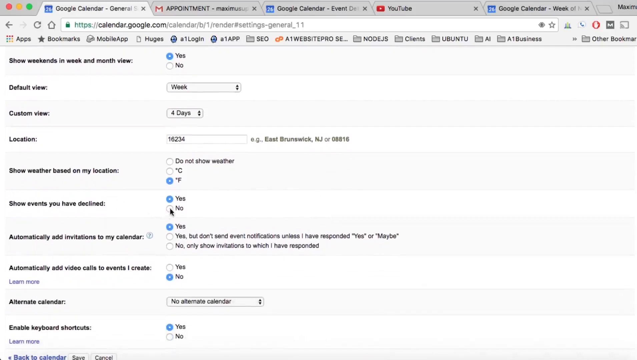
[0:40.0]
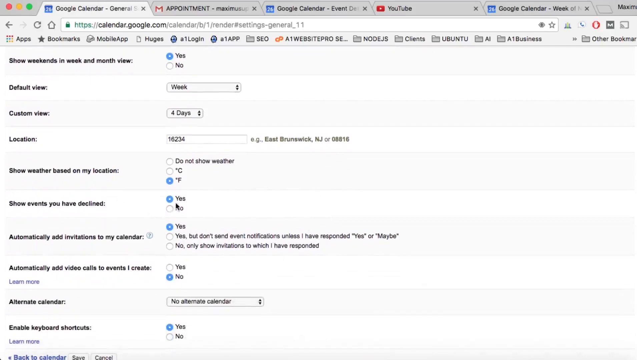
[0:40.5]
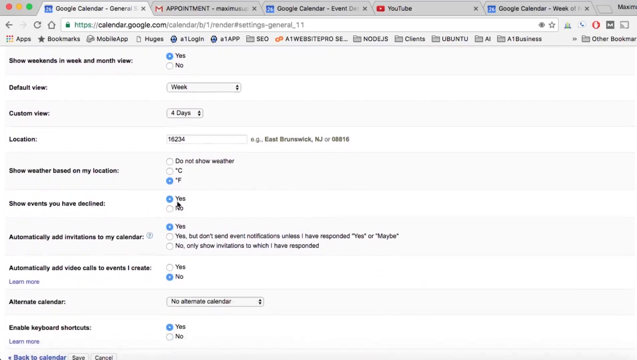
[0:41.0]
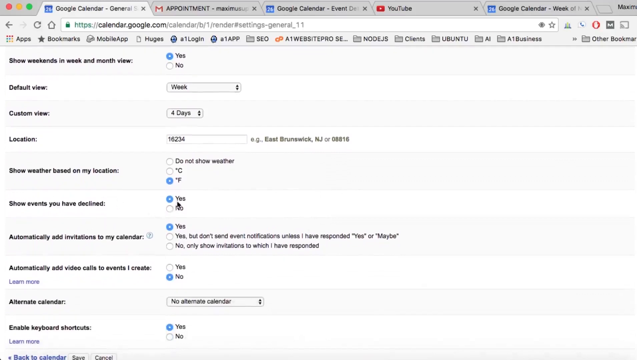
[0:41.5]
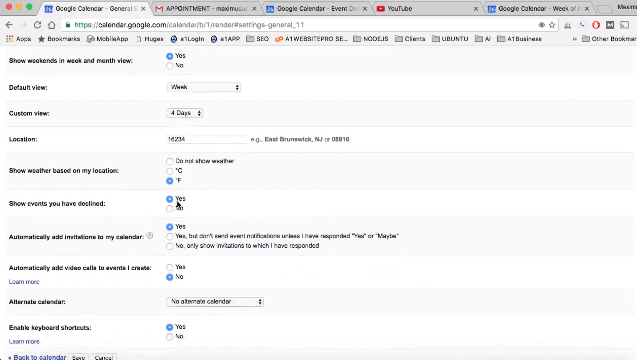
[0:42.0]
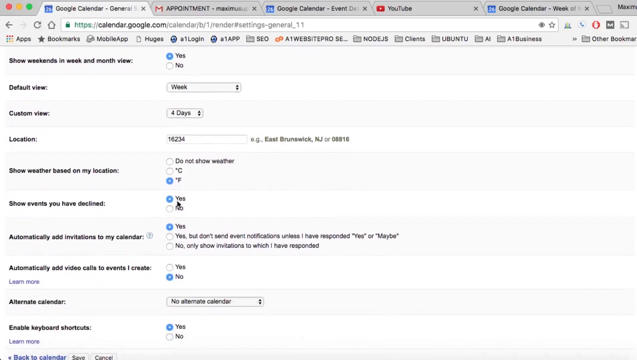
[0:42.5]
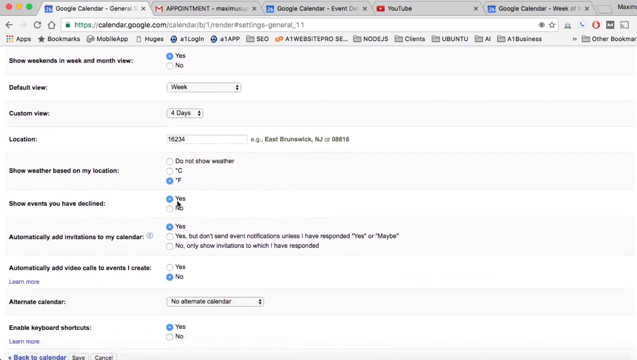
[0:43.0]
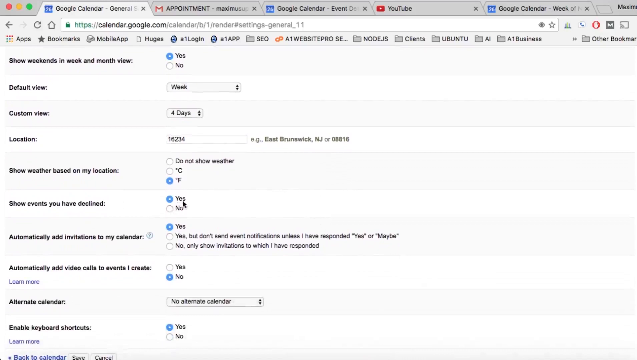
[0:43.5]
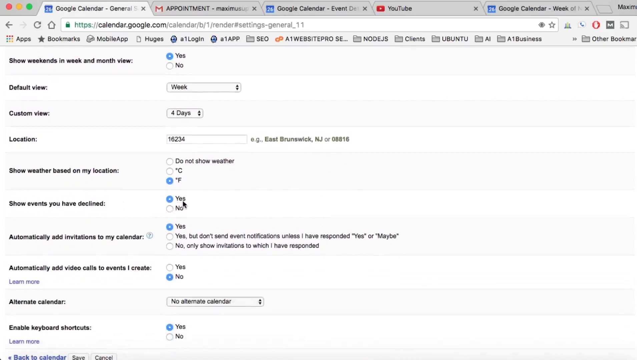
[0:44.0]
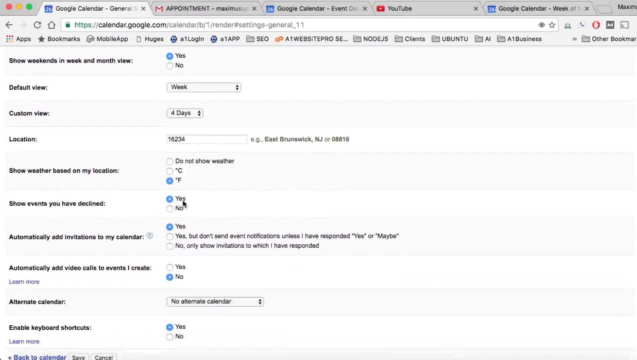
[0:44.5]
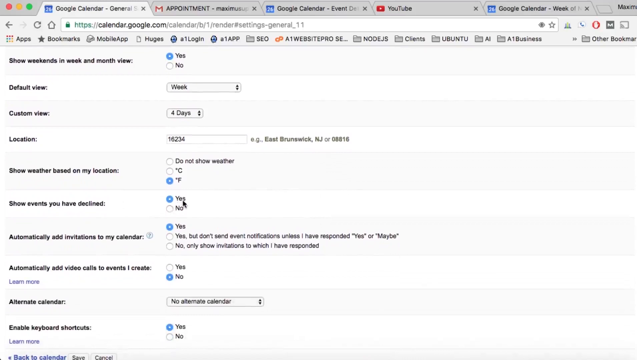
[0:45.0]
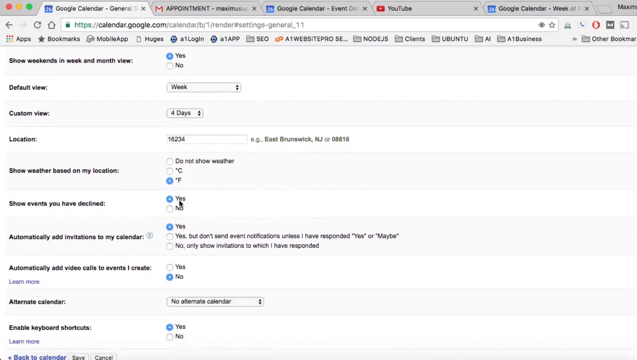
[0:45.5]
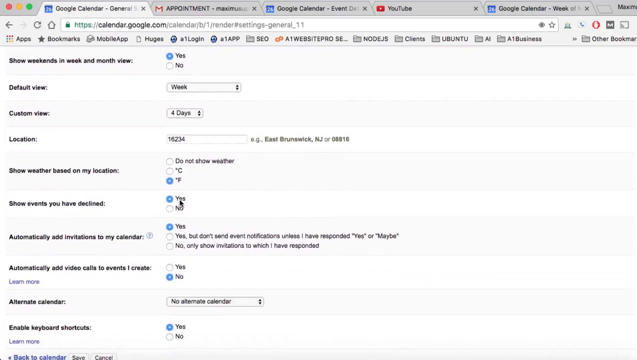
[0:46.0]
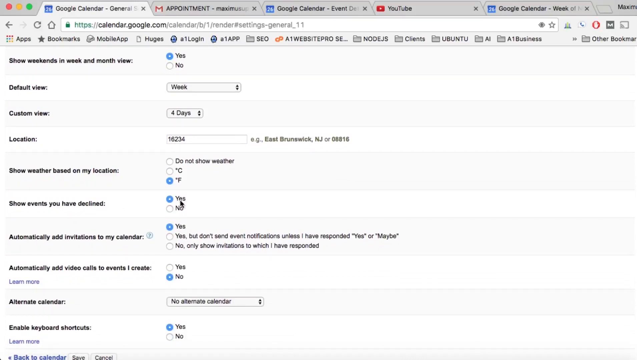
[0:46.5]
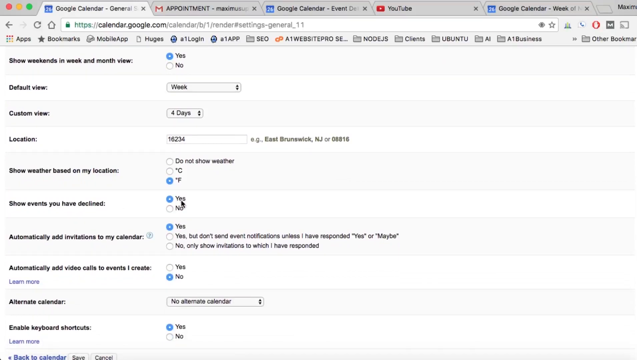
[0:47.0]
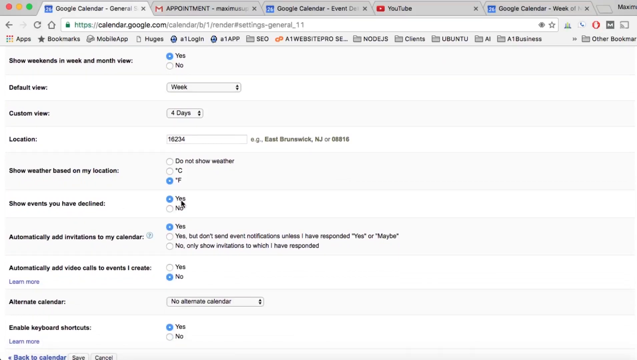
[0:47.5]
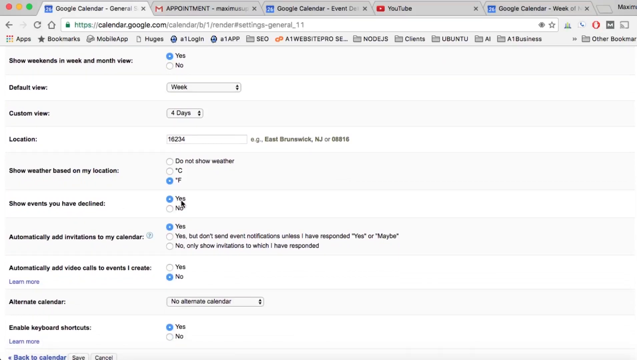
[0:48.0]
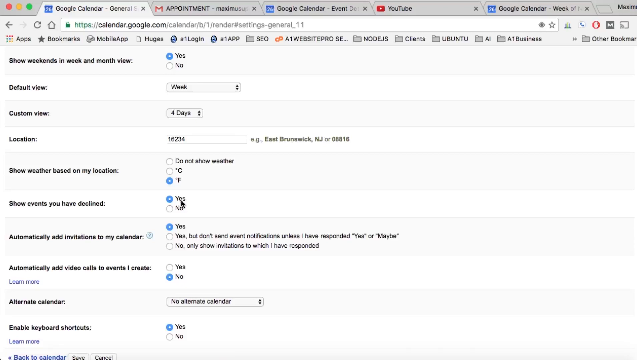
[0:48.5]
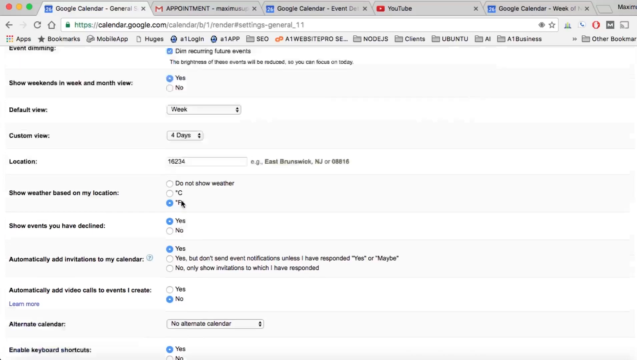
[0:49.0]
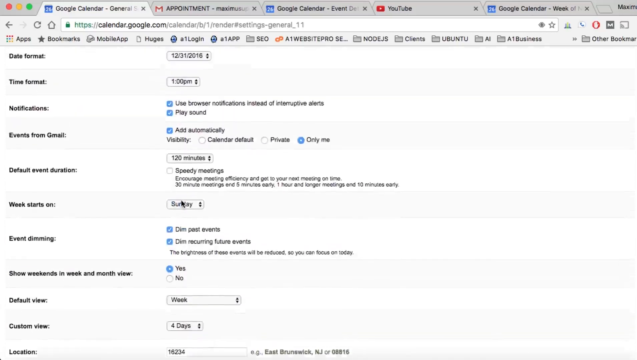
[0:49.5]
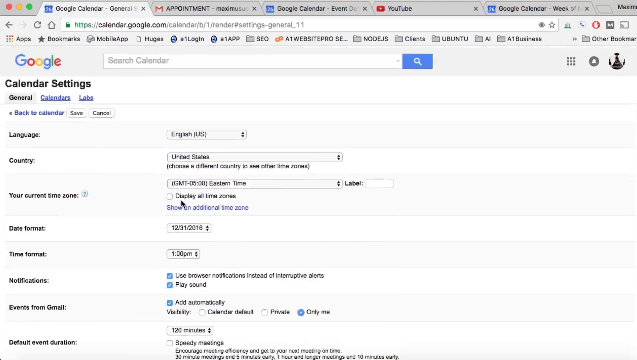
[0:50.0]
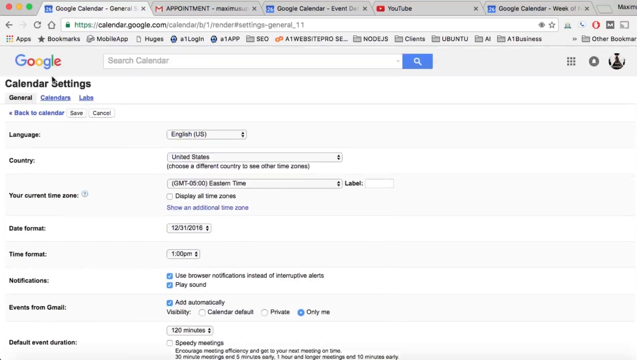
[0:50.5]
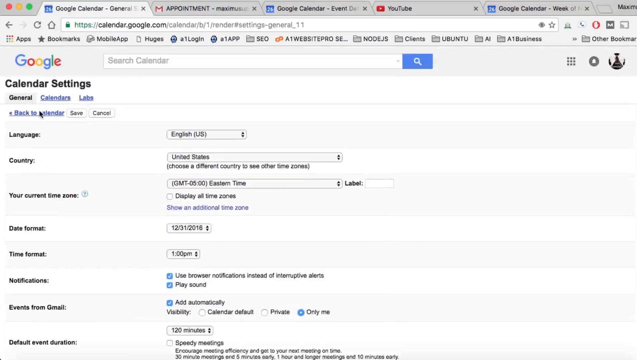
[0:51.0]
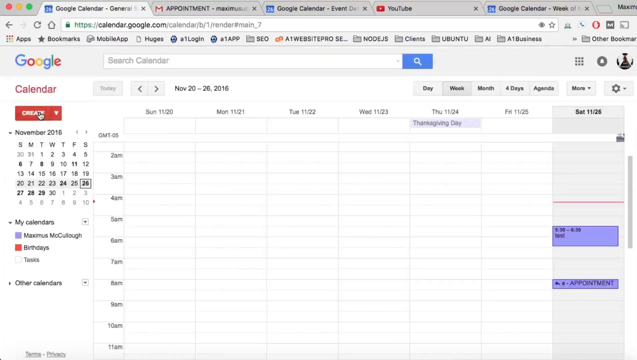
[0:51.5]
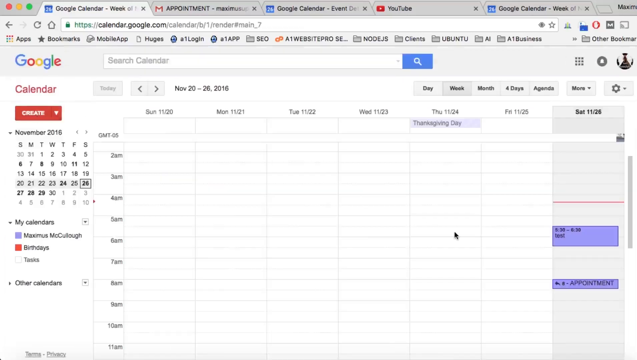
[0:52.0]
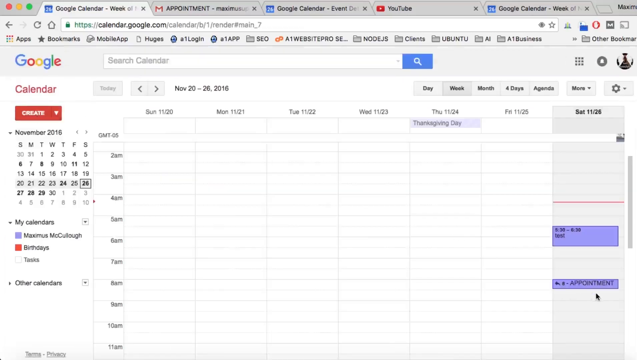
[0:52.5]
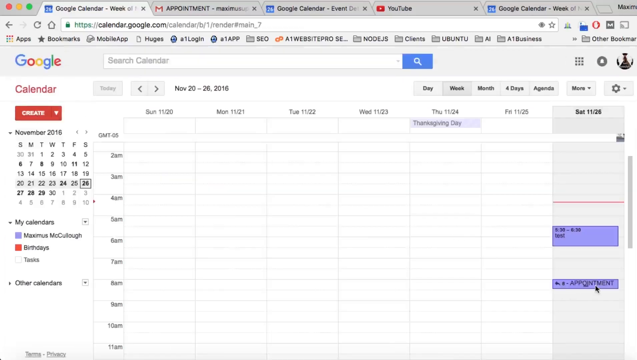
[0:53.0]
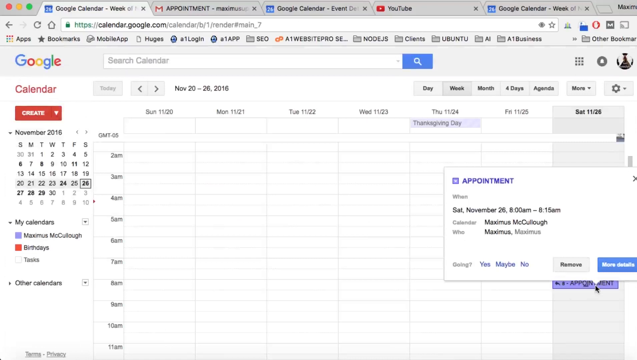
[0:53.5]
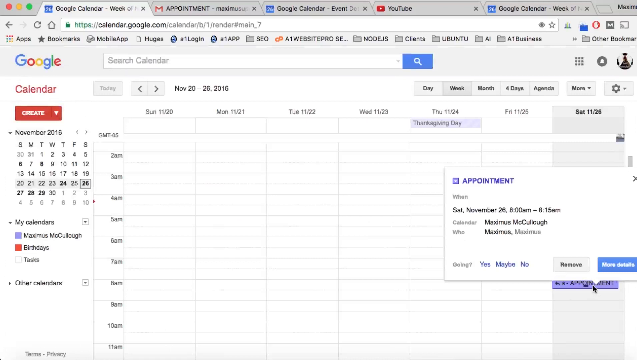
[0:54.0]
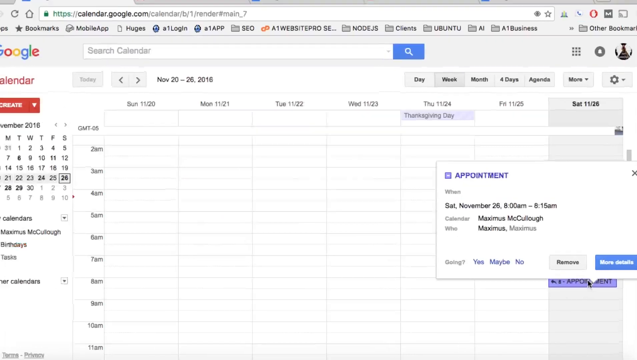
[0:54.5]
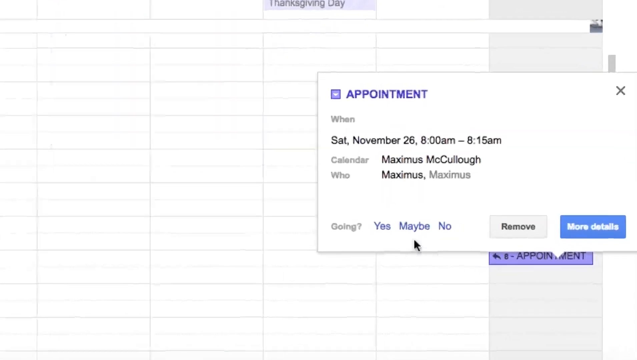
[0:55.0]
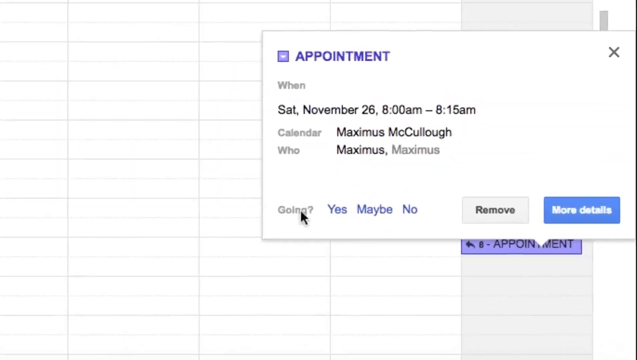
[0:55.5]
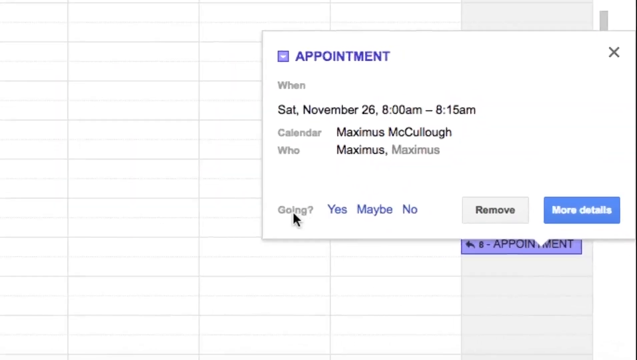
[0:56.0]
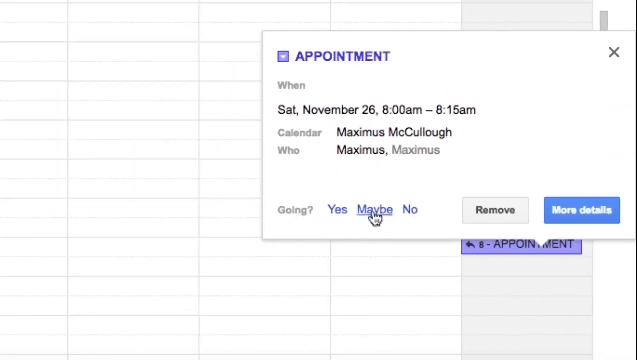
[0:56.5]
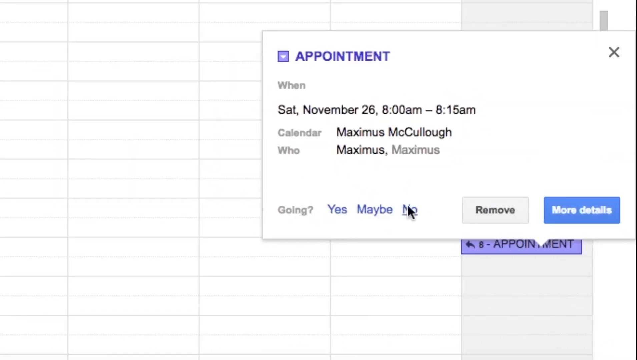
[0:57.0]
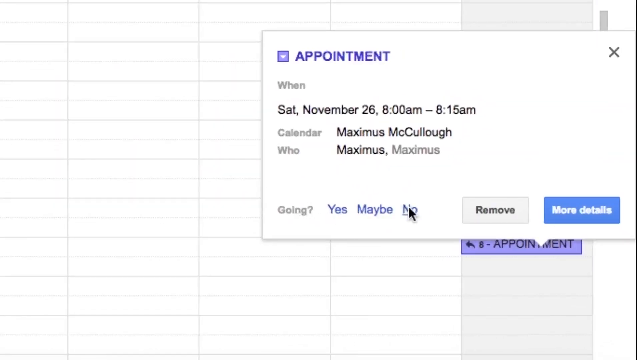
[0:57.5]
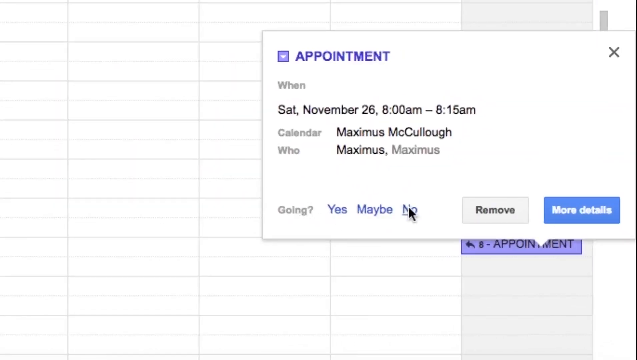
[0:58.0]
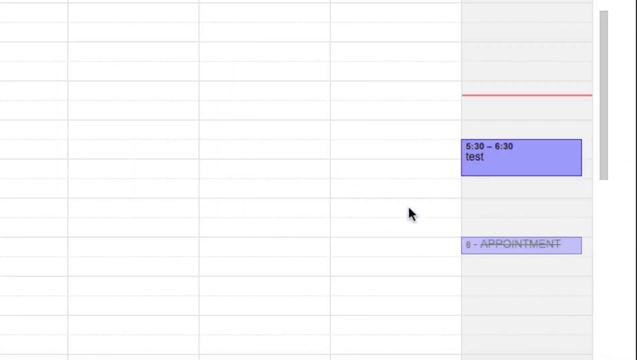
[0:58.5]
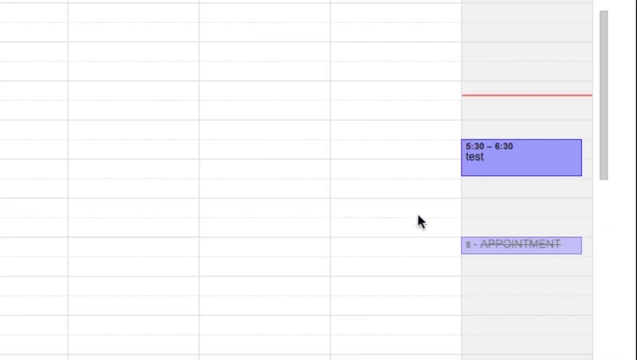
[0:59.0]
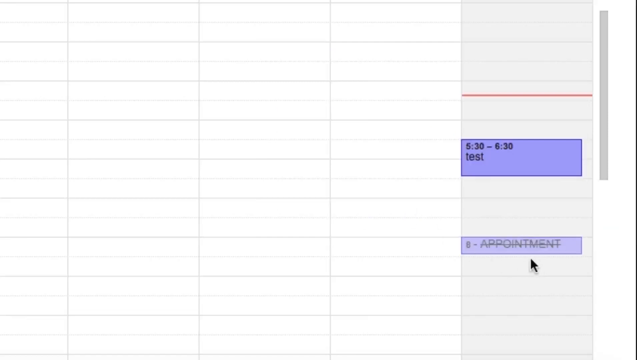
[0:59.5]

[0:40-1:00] A computer screen shows multiple tabs along the top. The mouse is active further down the screen, below the tabs. The active tab is "Google Calendar week of", and the arrow moves to adjust an appointment on Saturday. The view stays the same while the mouse moves to different parts of the content below the tabs, adjusting entries in Google Calendar. The tabs read appointment, Google Calendar event, YouTube, and Google Calendar week of. The active tab has multiple columns on the left-hand side of the screen, each with a title in black type; the columns all have identical spacing and width, and their contents differ.